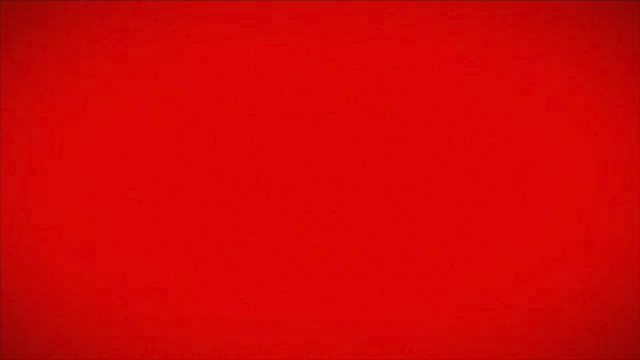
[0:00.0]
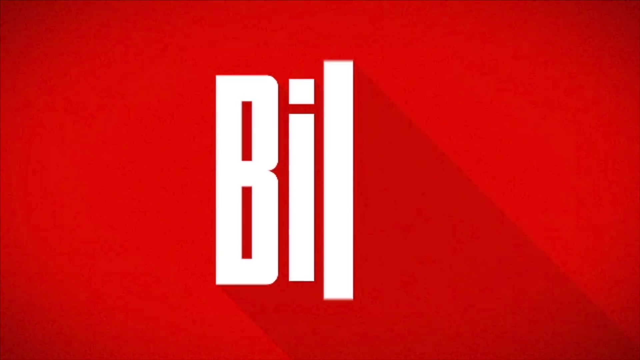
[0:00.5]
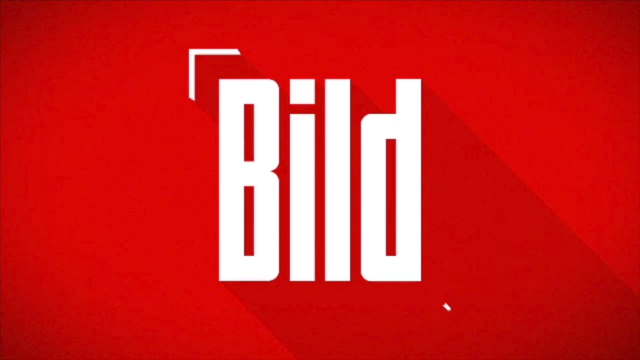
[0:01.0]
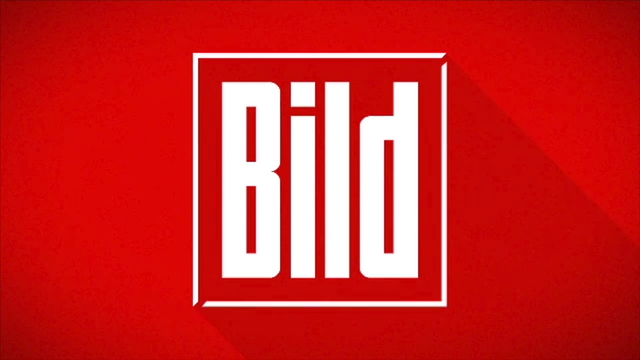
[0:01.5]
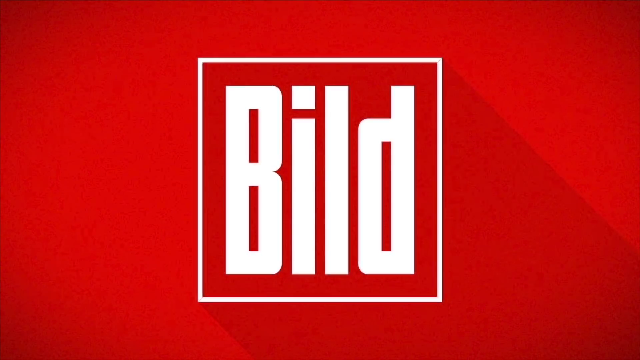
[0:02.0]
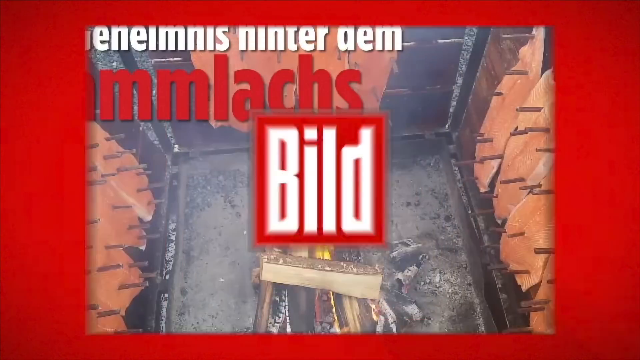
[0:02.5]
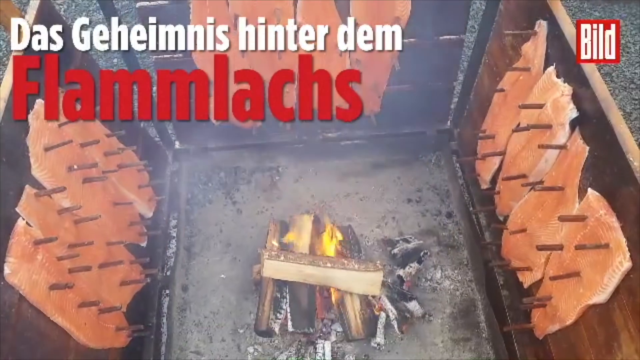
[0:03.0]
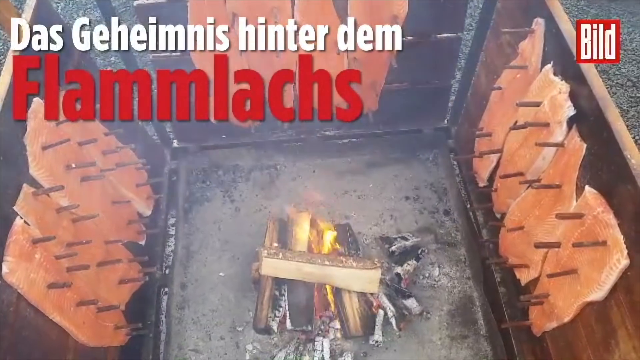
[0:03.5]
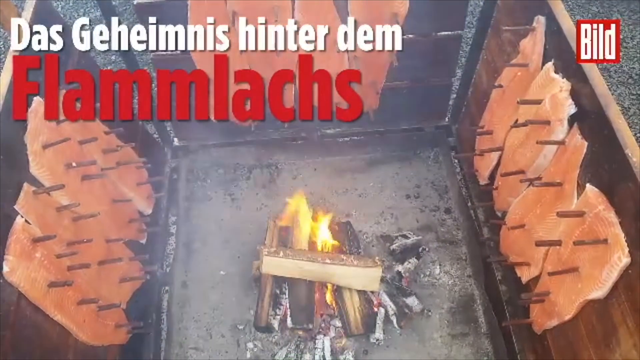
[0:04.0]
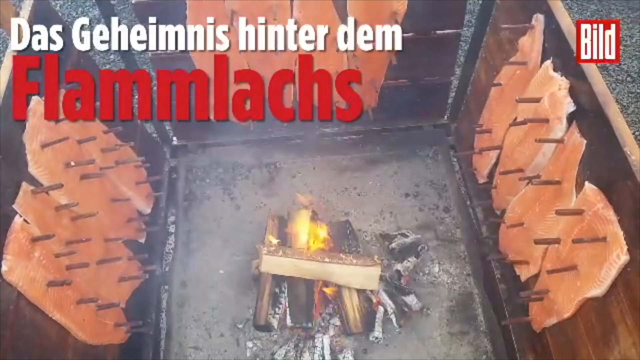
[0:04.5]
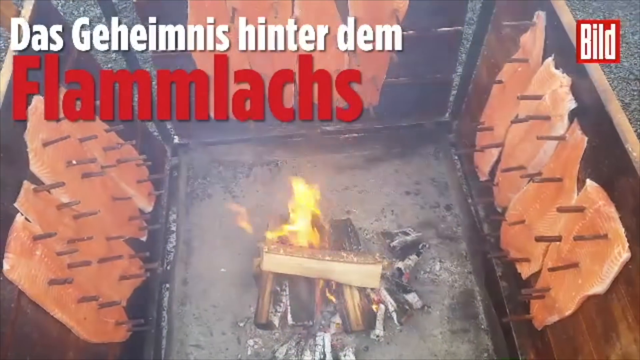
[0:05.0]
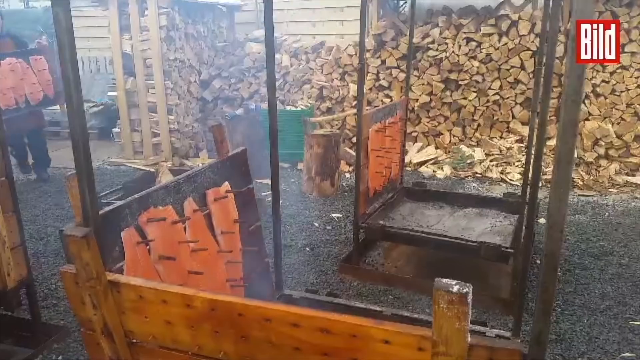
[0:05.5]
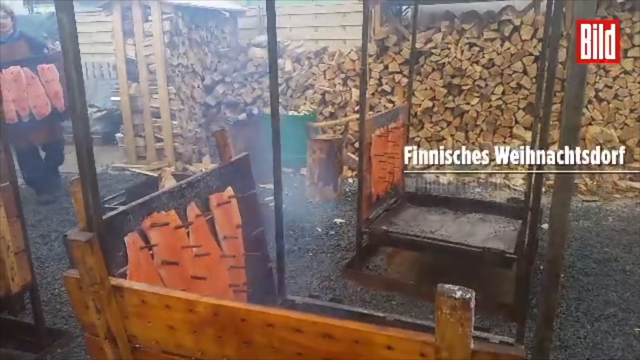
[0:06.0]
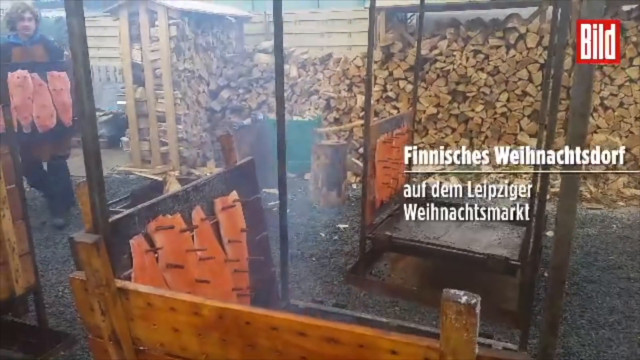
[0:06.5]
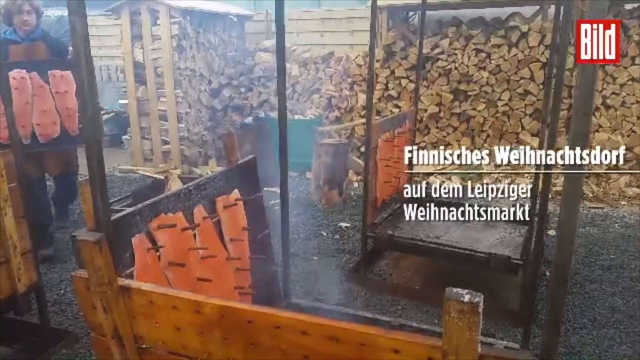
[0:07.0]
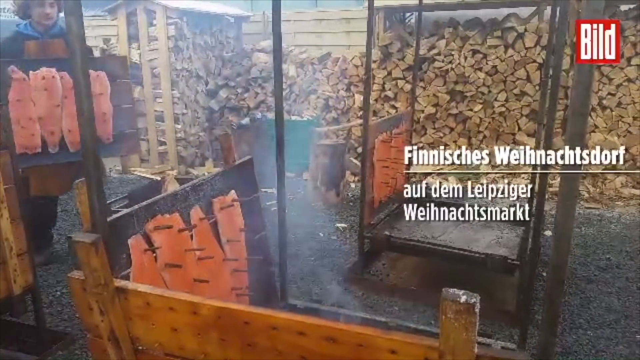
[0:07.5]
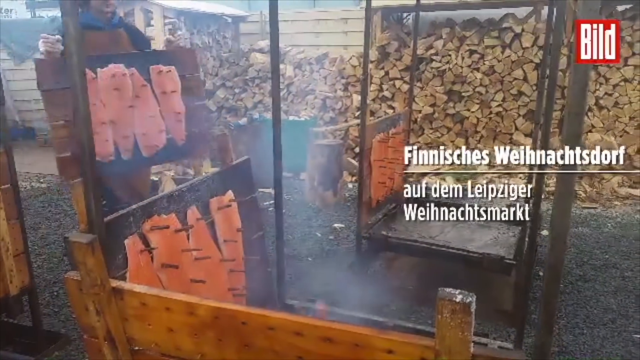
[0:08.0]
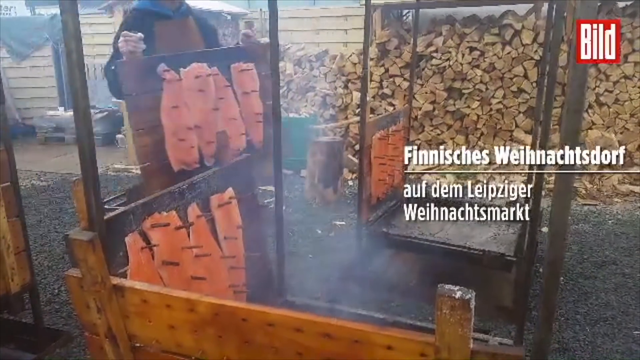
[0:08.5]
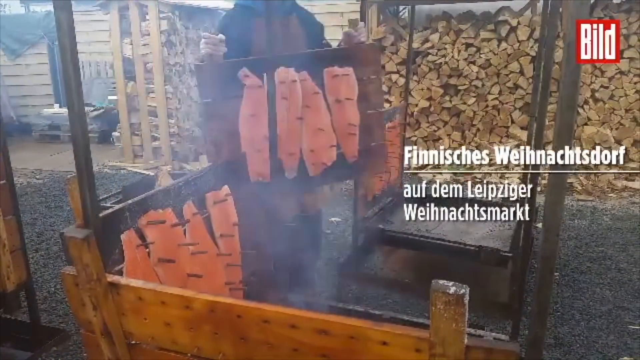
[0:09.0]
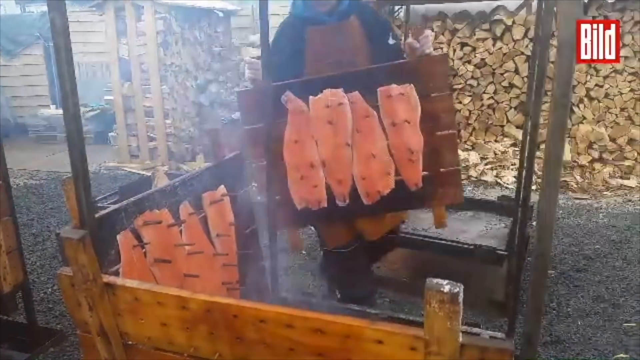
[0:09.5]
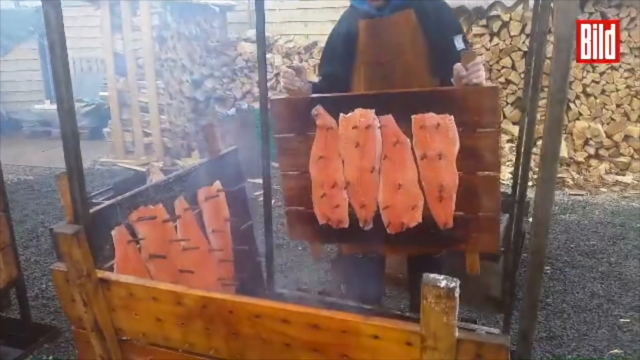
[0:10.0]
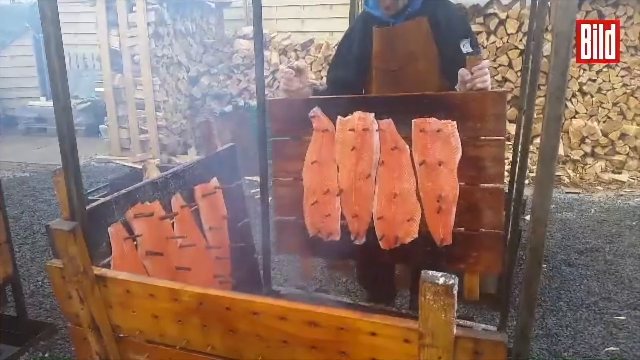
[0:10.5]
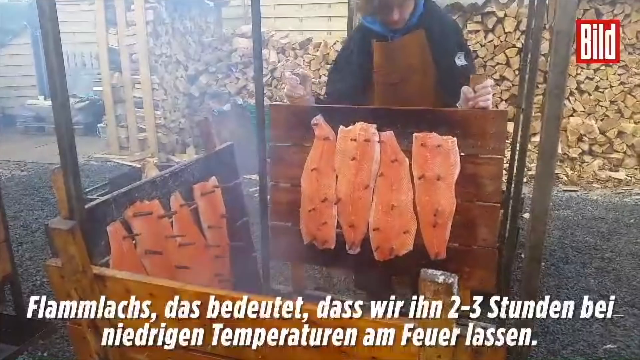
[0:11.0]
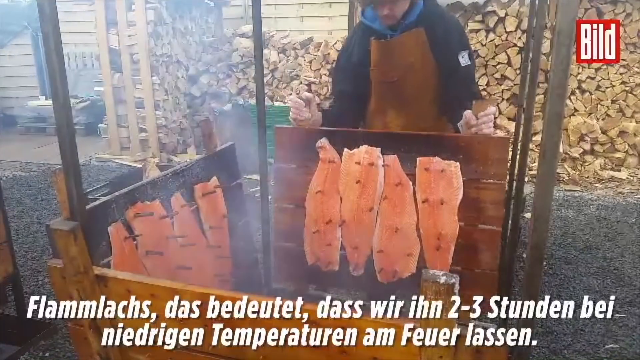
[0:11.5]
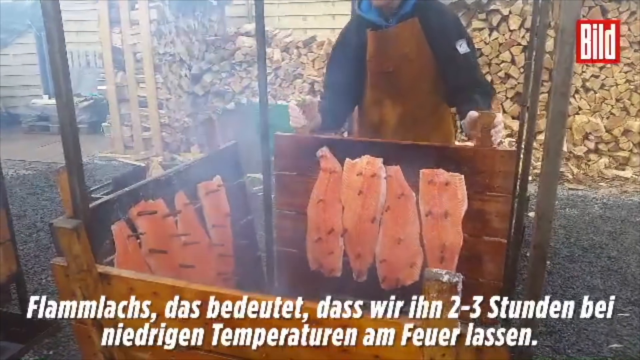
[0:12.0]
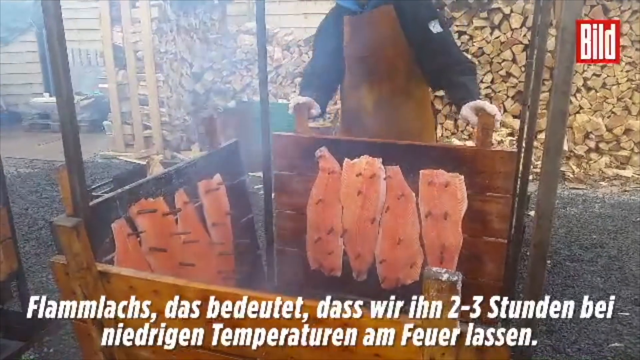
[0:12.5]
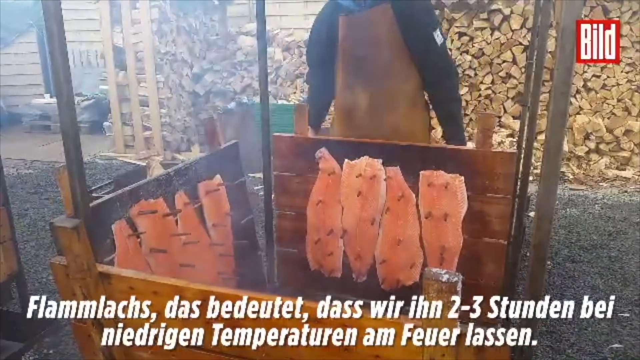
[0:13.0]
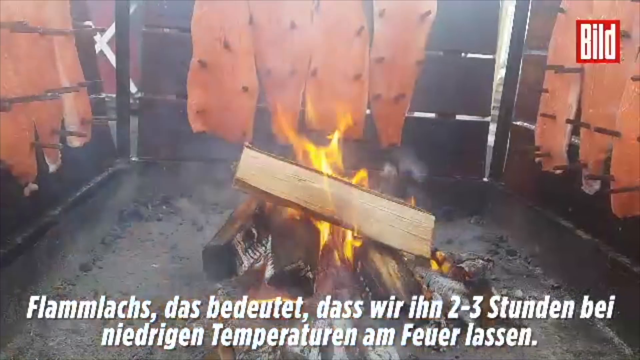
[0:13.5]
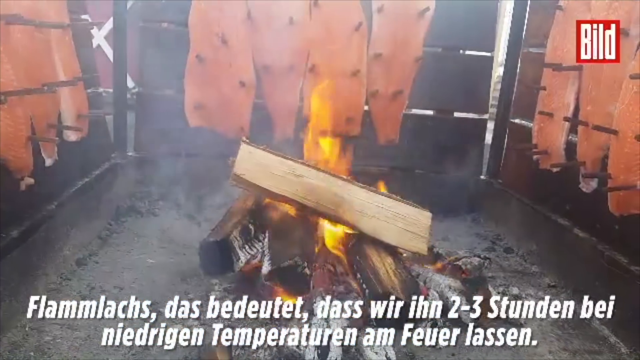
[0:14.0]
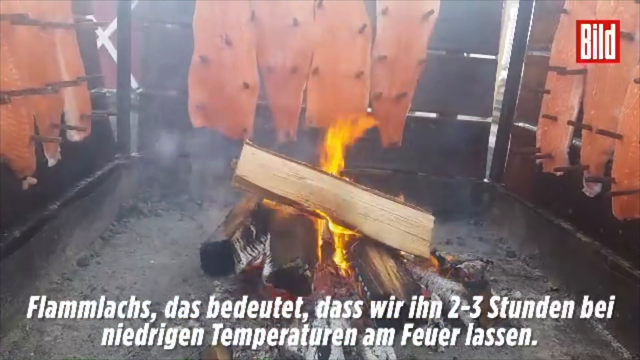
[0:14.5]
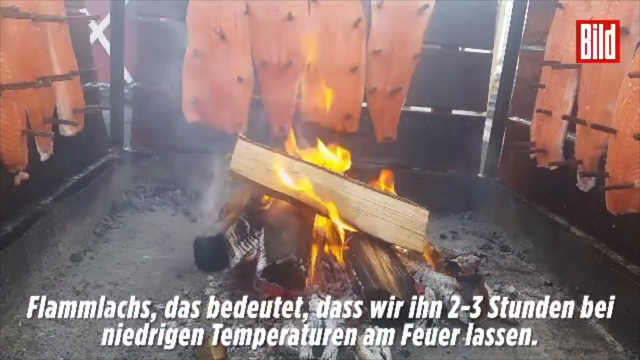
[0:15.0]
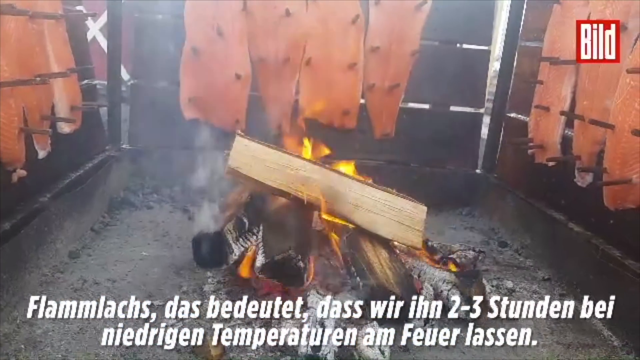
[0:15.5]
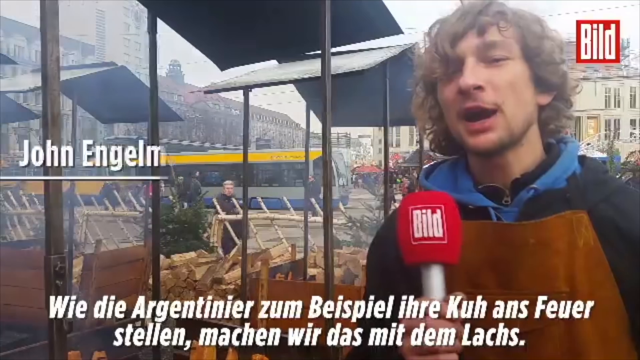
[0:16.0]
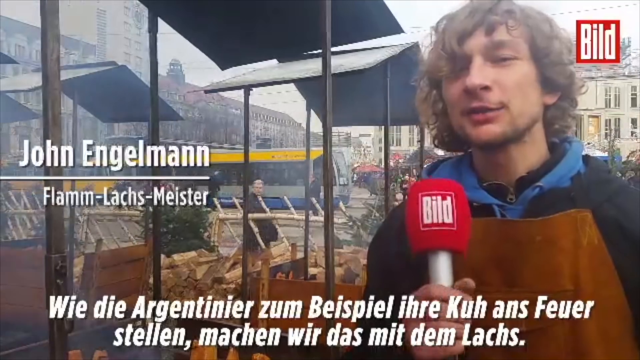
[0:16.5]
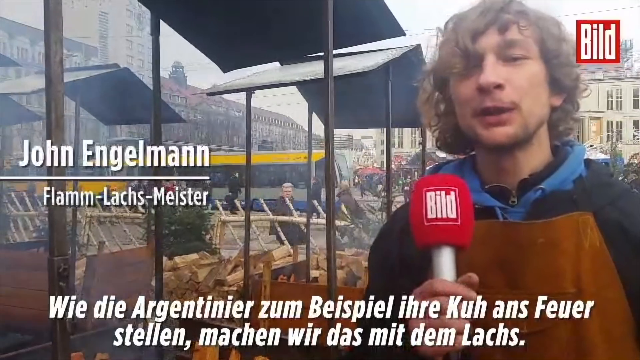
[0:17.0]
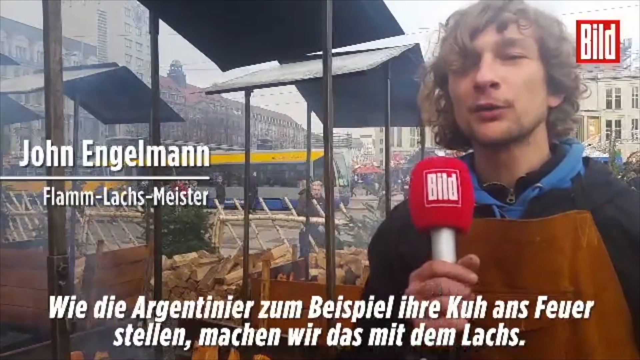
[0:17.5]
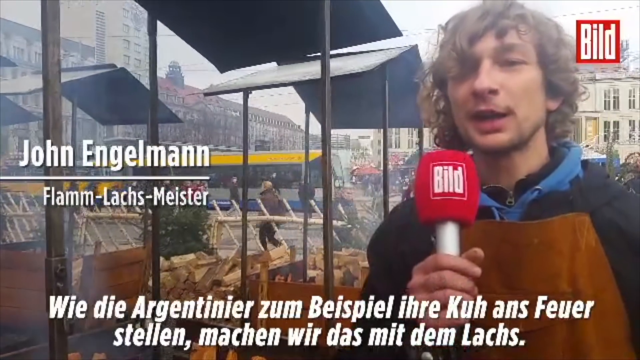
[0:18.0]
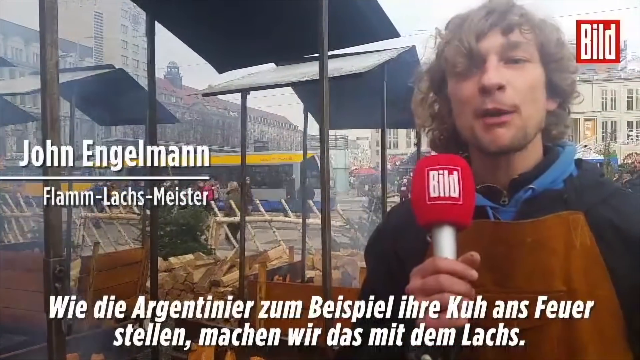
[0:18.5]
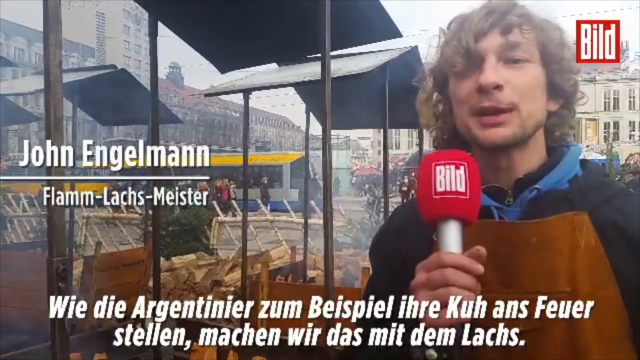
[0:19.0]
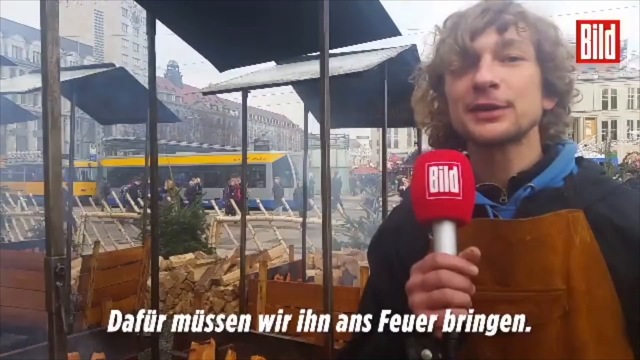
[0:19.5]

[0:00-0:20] Some text written in white and black appears, seemingly in Dutch. A person comes in holding wood and puts the wood down for a fire, apparently as part of the process of taking wood and making the fire. A man is being interviewed and talks; he has short curly hair and wears a blue jacket and a brown apron. The interview is by a news channel called build. There is a lot of food in the background, along with some words written in foreign languages. In the background a bus passes, and many people walk along the street, which looks like a busy street.